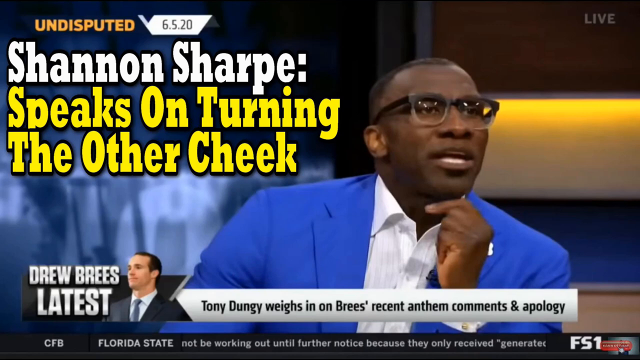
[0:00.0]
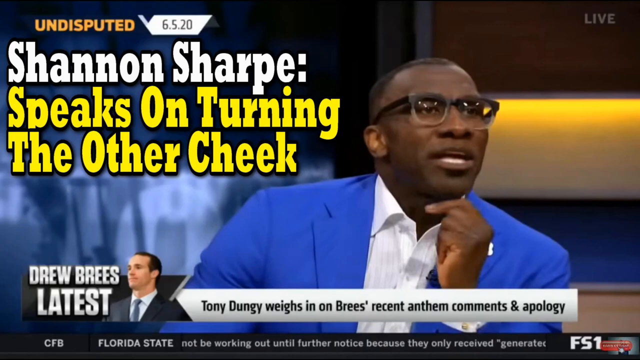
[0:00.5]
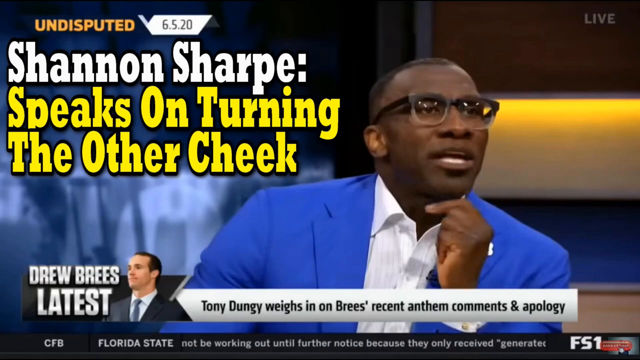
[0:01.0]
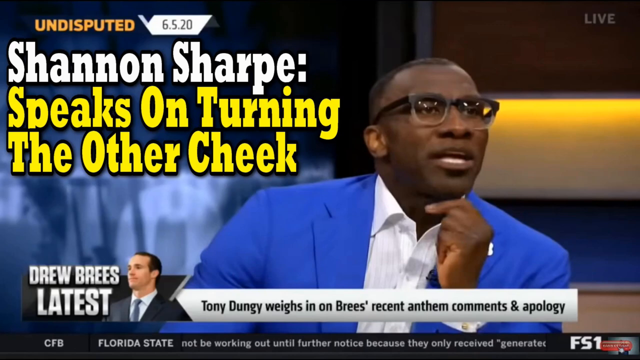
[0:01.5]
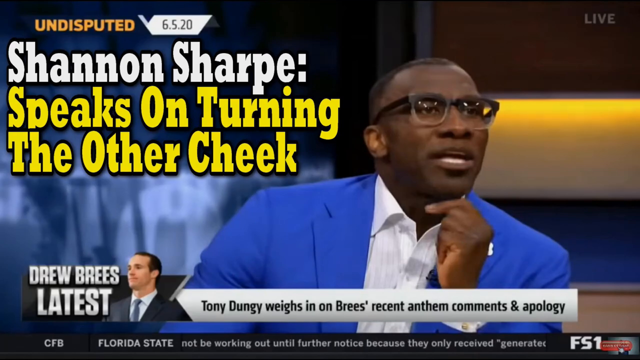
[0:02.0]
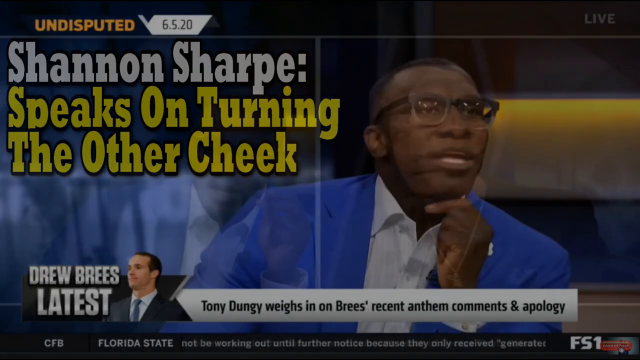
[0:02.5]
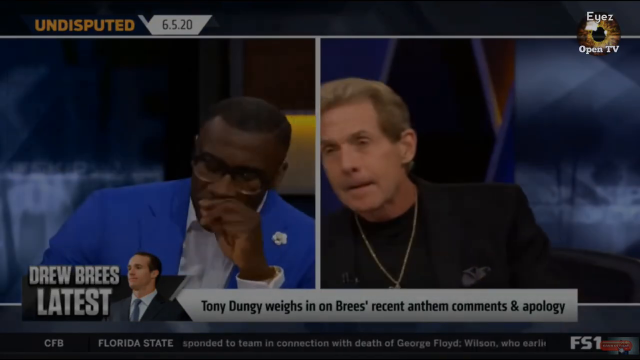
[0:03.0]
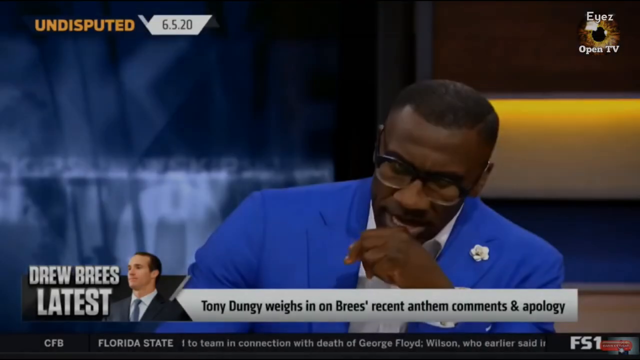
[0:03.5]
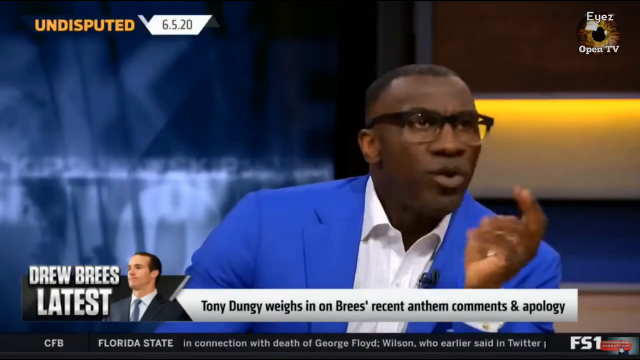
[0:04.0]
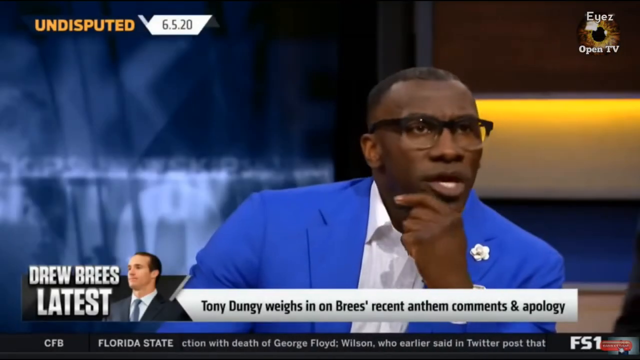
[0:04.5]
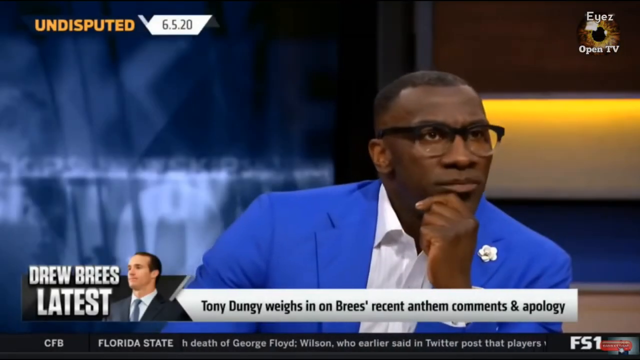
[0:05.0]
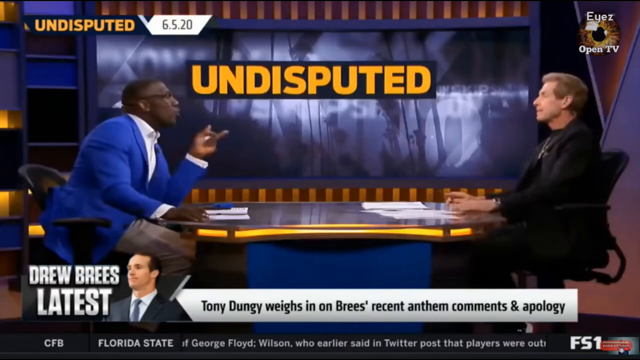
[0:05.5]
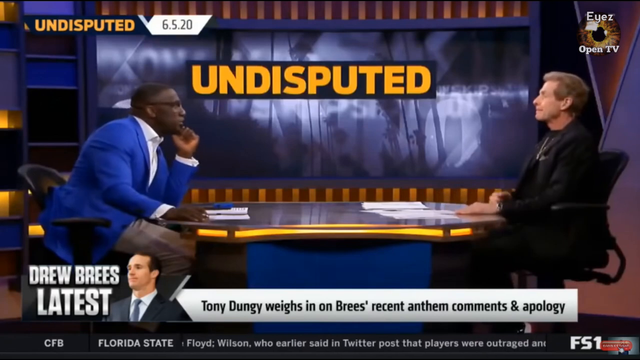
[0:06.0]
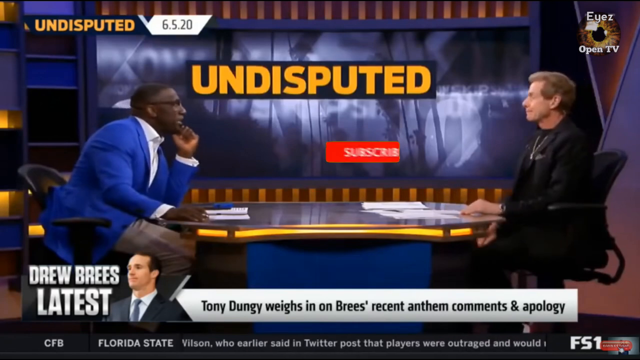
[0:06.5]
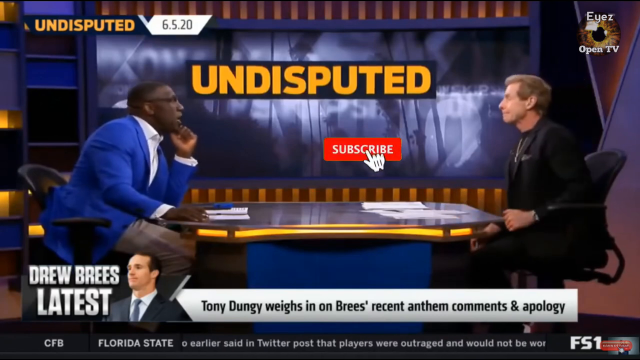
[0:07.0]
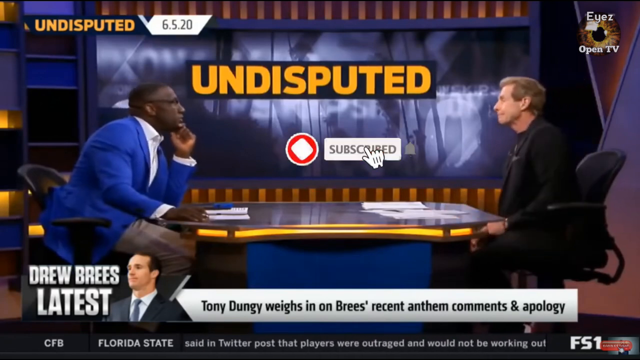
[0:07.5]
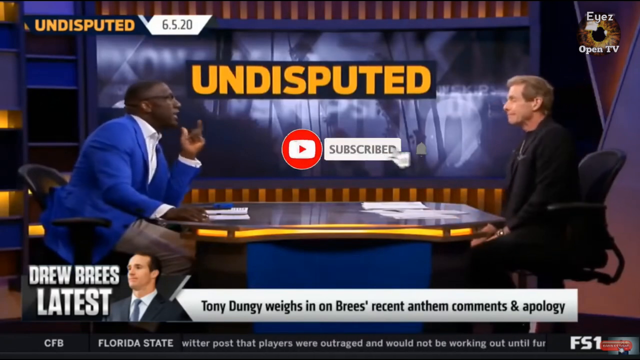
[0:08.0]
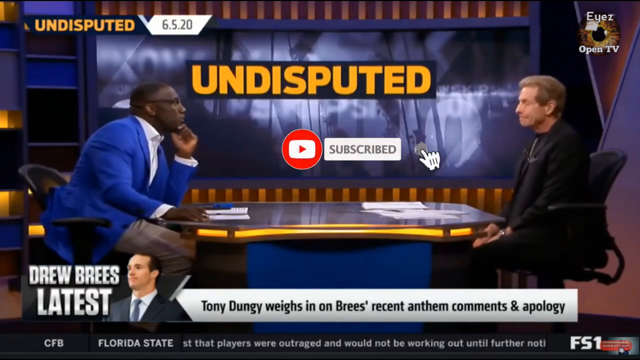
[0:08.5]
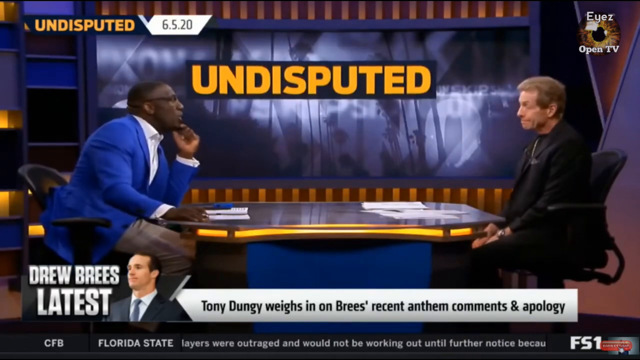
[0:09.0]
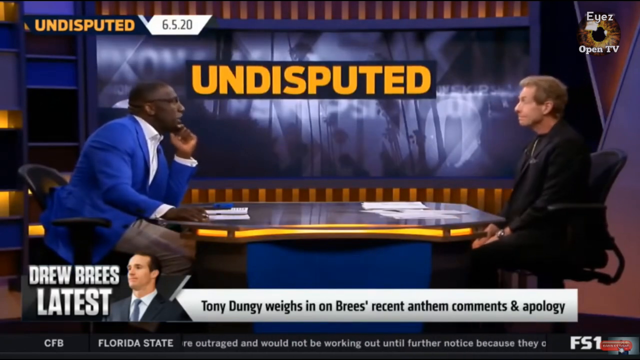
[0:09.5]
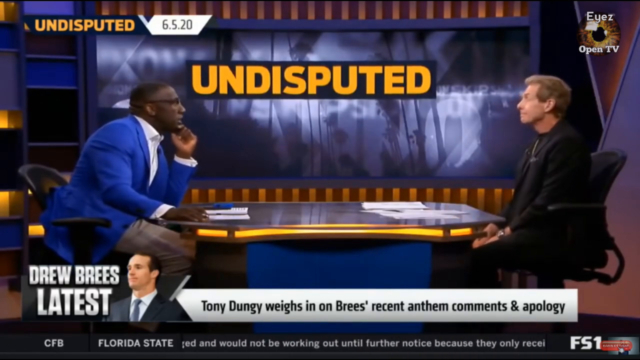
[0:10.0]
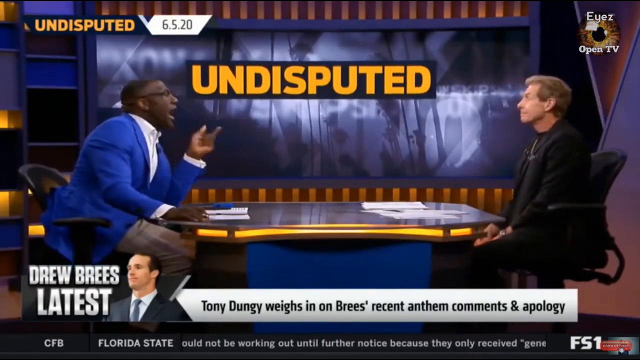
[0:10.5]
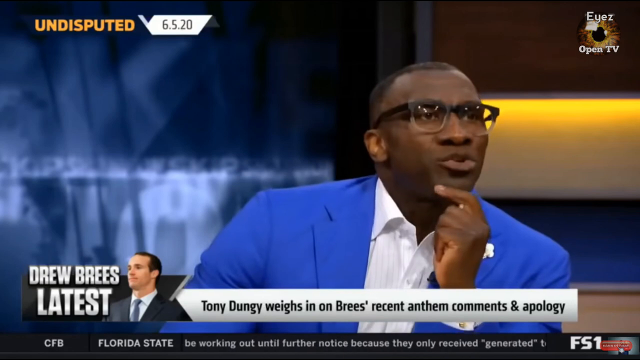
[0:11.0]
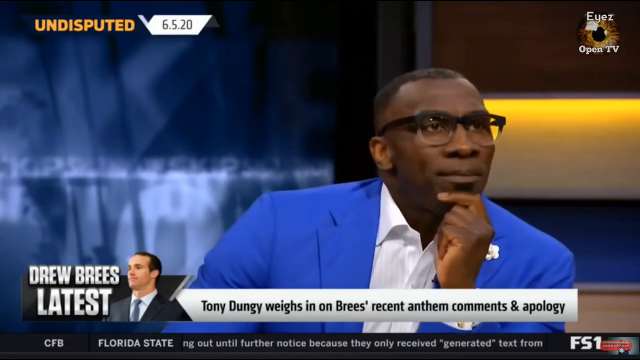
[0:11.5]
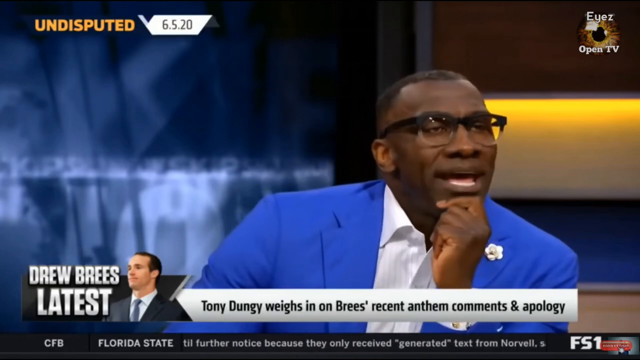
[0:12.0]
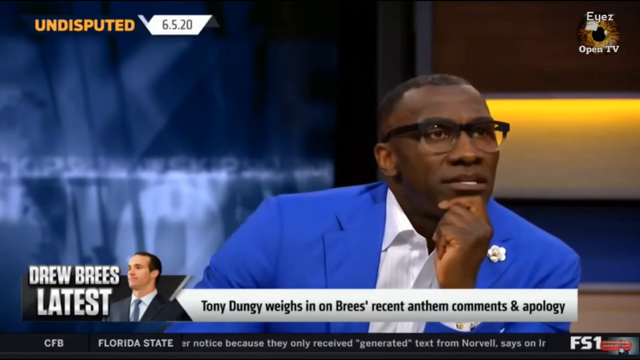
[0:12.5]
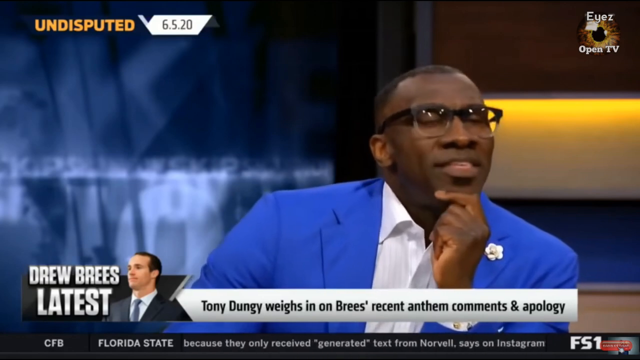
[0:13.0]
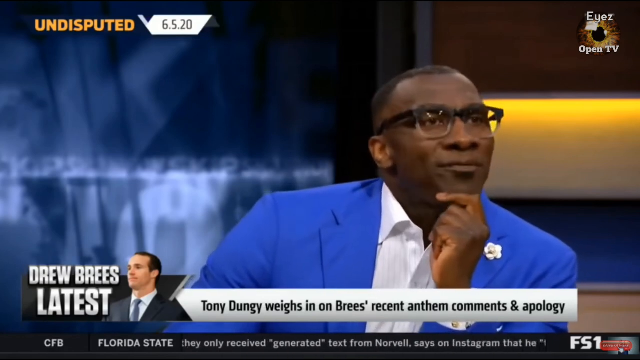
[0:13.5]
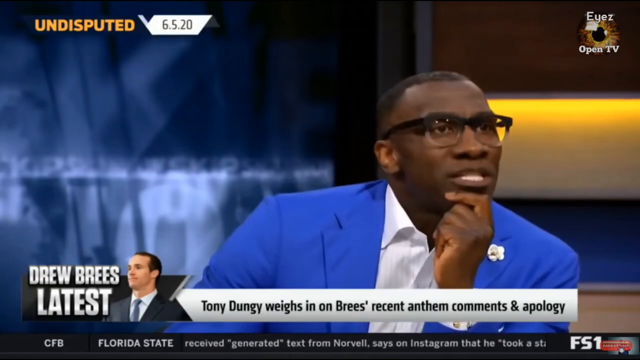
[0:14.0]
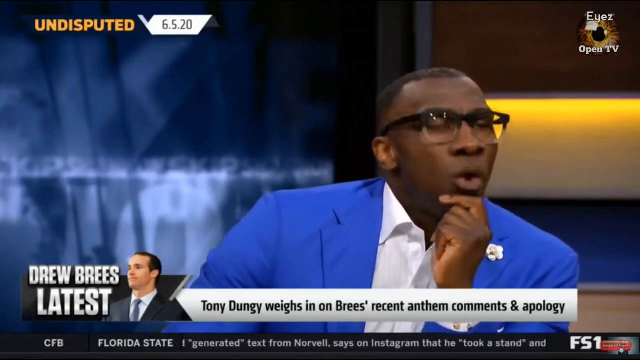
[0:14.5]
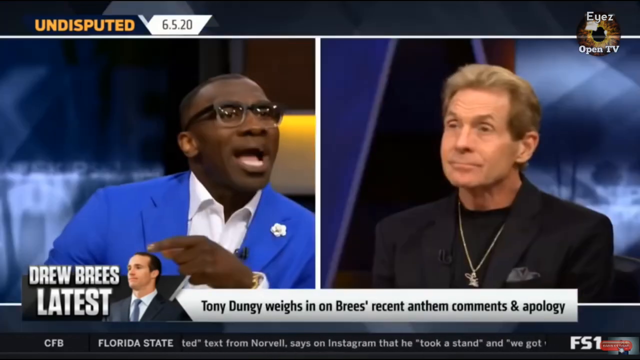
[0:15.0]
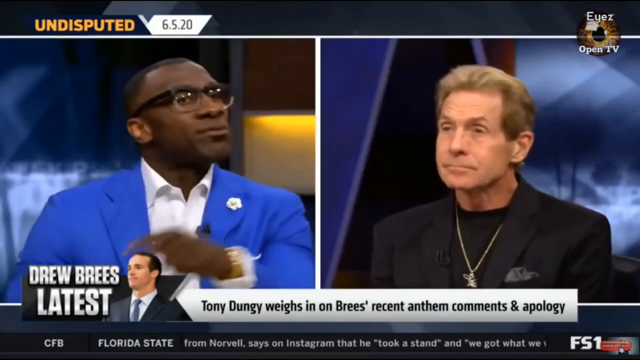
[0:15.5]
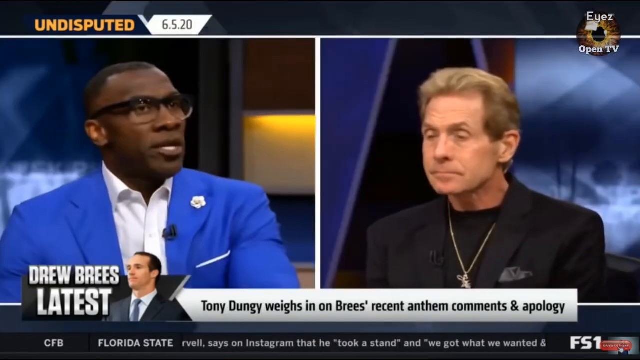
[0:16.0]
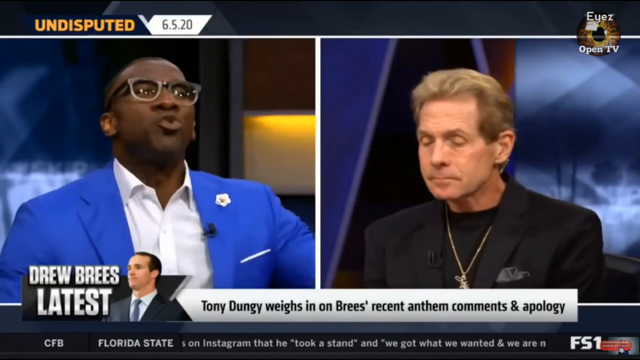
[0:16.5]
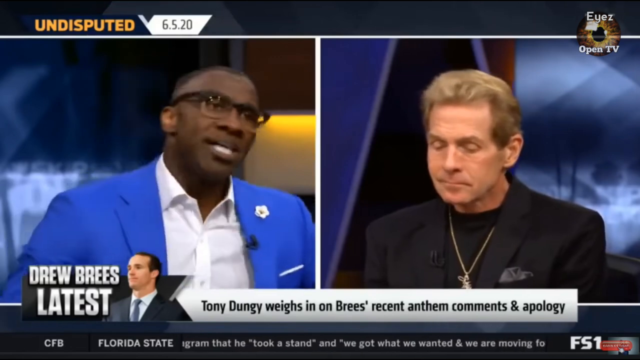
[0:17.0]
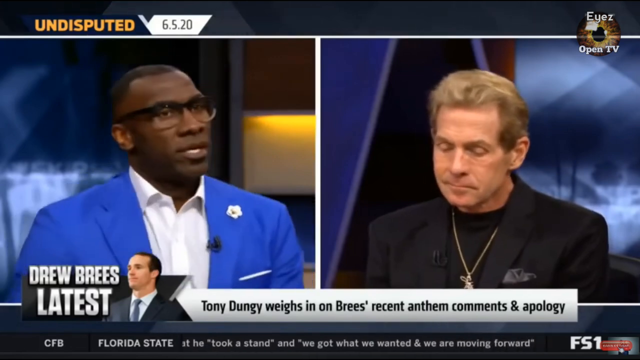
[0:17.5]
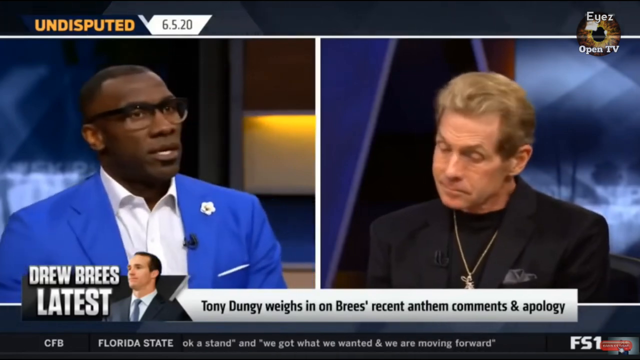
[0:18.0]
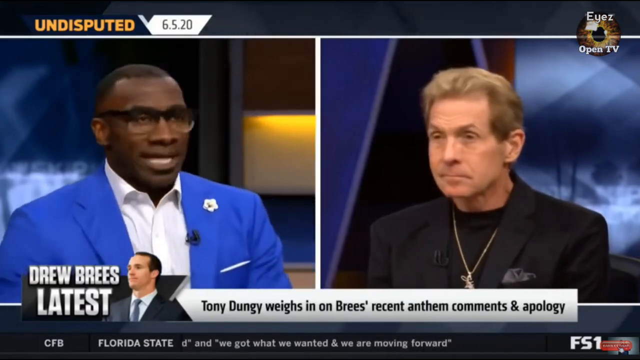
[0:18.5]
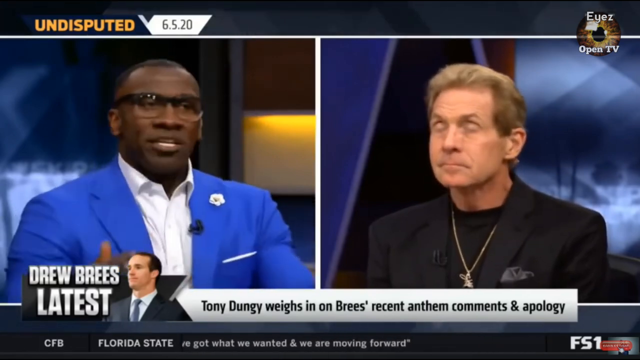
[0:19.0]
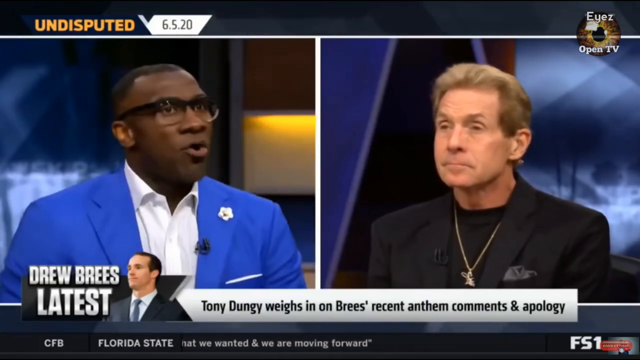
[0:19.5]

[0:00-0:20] Shannon Sharp, a former football player, is on the right side of the screen, wearing glasses, a black suit and a white button-down shirt. "Live" appears in the upper right-hand corner. On the left side, "undisputed" appears in orange, followed by "6.5.20" in black, then "Shannon Sharp" in white. Yellow text reads "speaks on turning the other cheek", and another line reads "Tony Dungy weighs in on the Brees recent anthem comments and apology". Along the bottom, "Florida State" appears with words scrolling by. Shannon Sharp, who is black, is talking to another co-host, a white man in a black suit. Shannon Sharp does most of the talking, while the other man mostly nods his head and responds only a little.